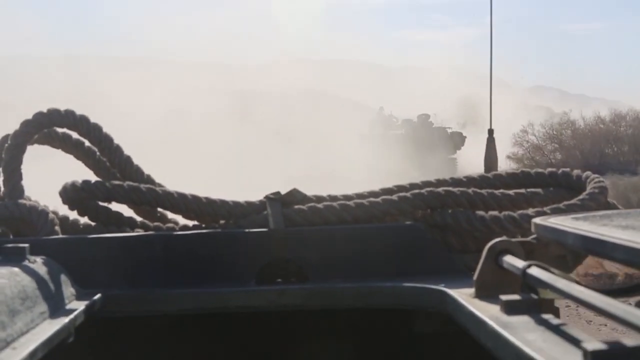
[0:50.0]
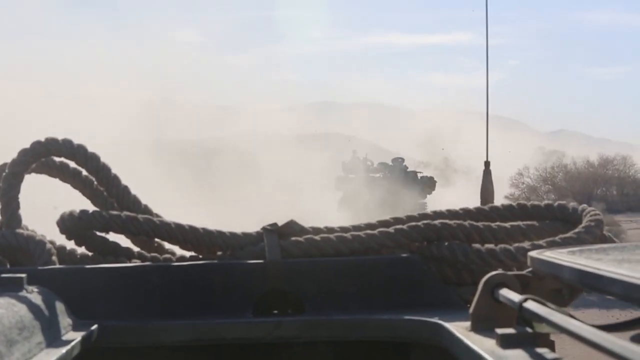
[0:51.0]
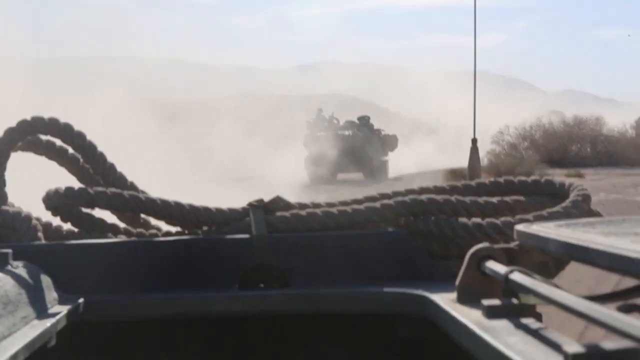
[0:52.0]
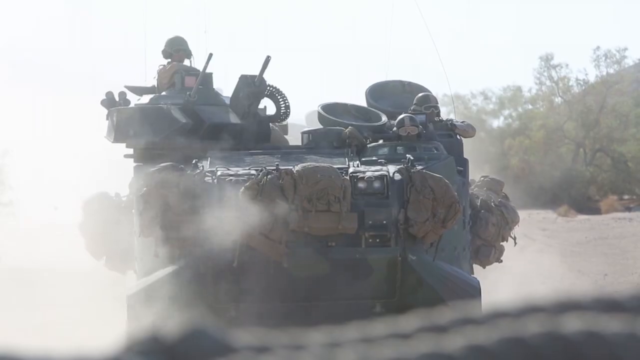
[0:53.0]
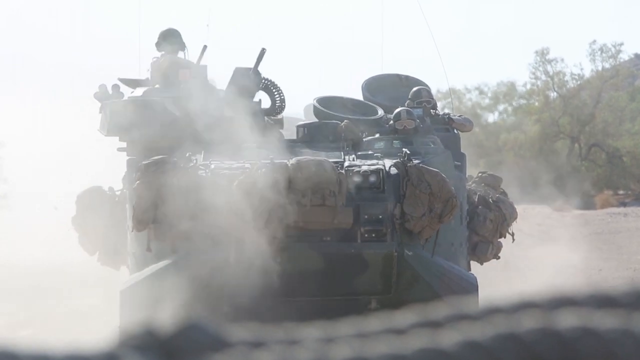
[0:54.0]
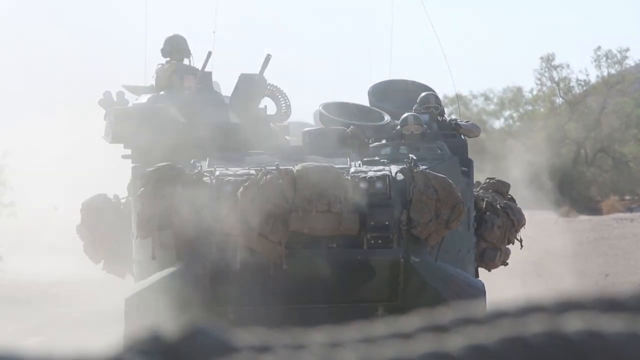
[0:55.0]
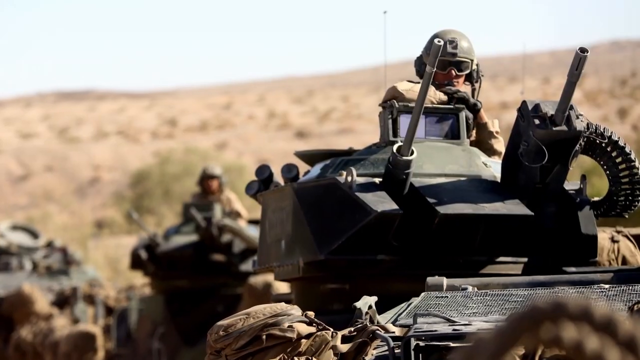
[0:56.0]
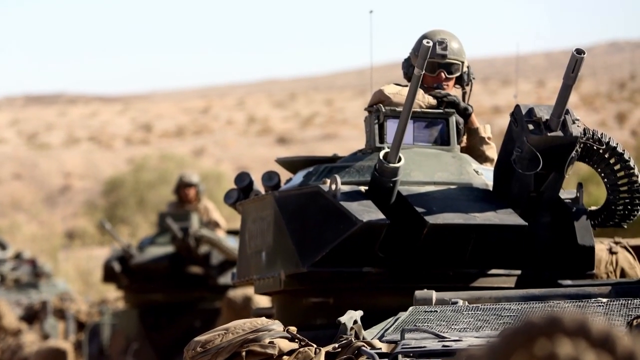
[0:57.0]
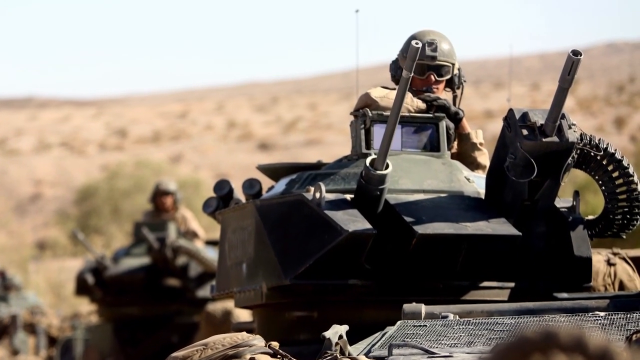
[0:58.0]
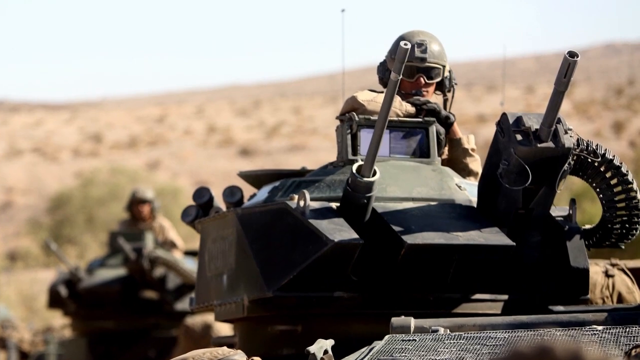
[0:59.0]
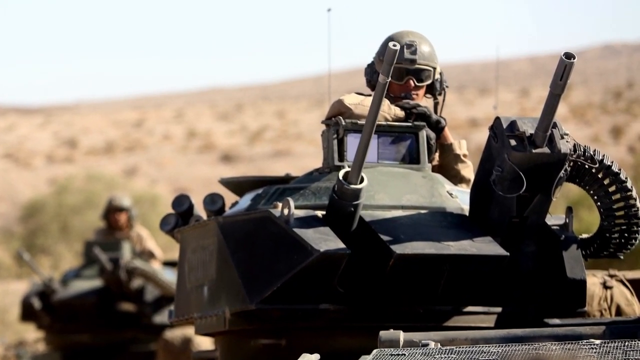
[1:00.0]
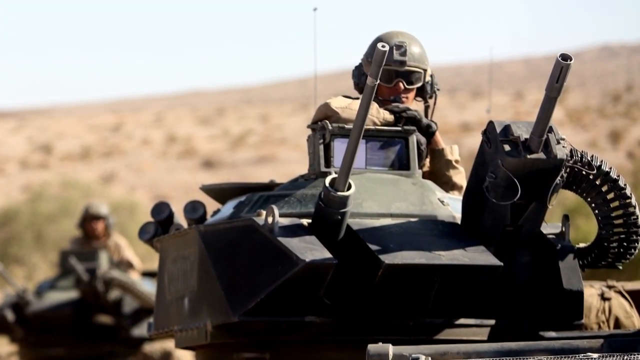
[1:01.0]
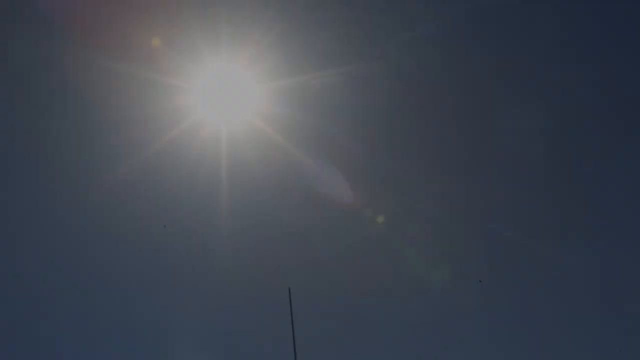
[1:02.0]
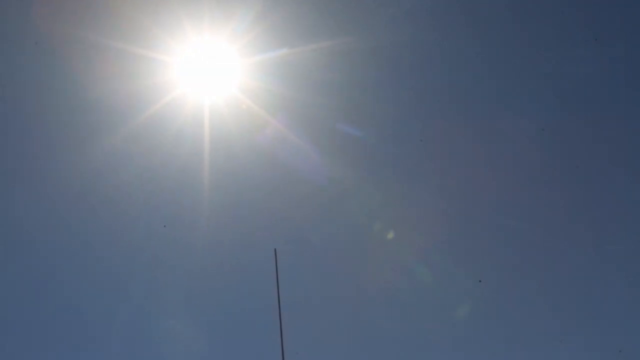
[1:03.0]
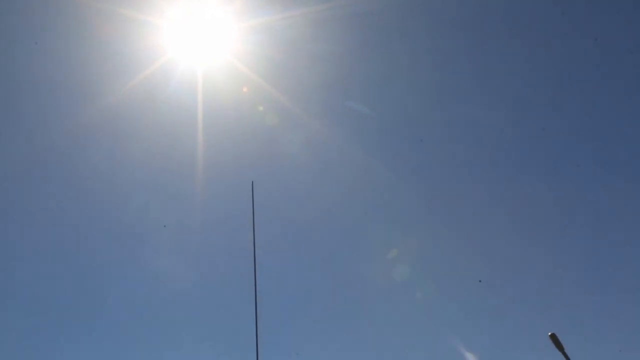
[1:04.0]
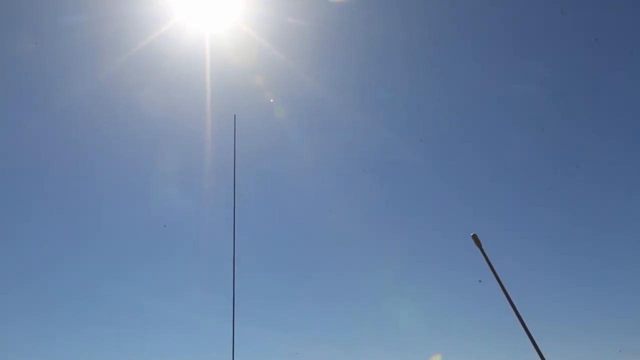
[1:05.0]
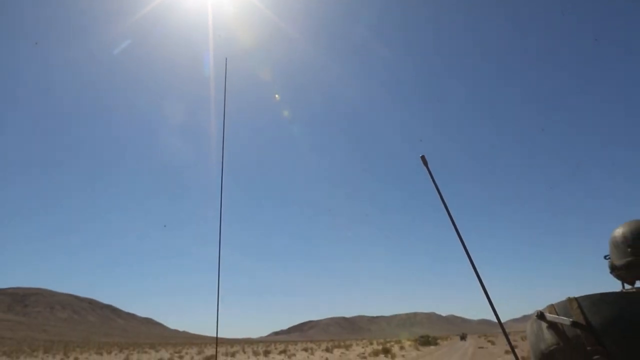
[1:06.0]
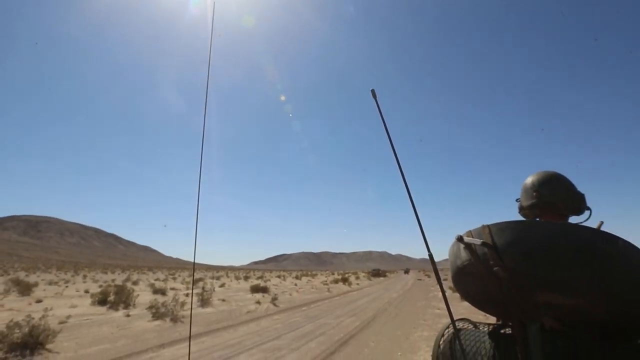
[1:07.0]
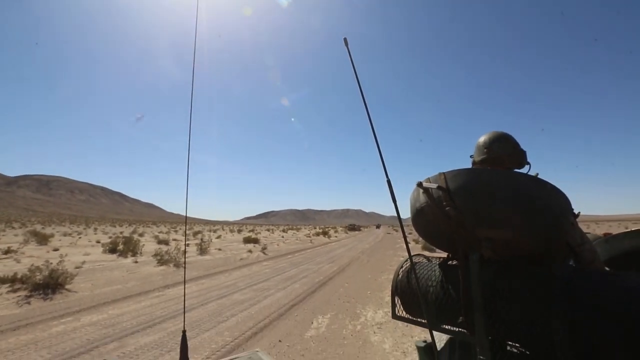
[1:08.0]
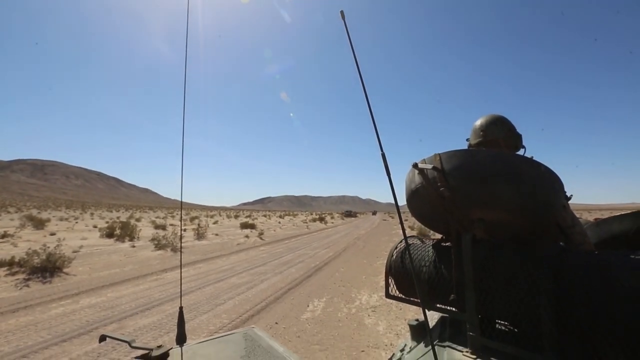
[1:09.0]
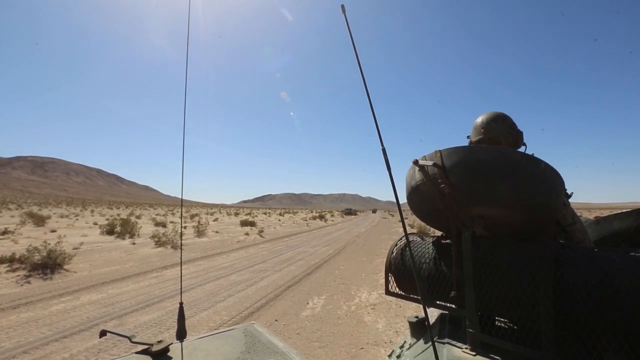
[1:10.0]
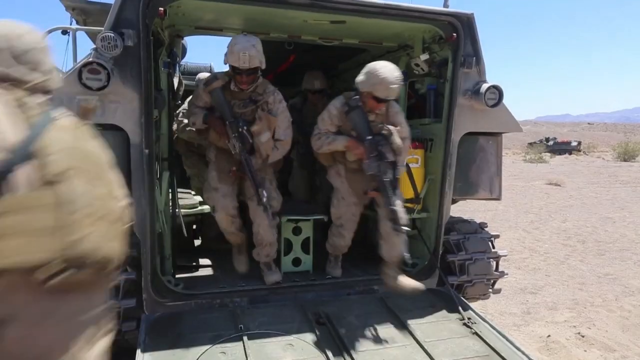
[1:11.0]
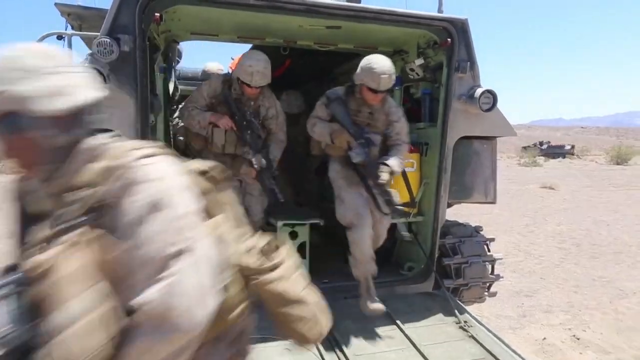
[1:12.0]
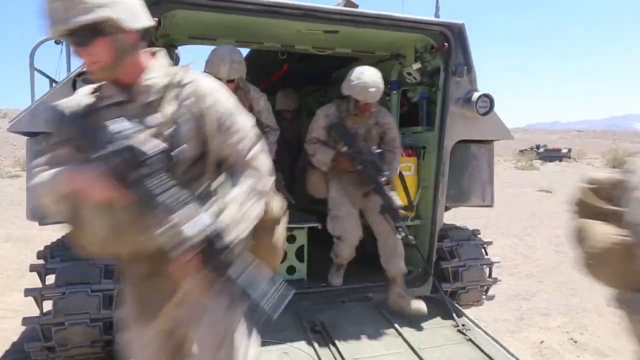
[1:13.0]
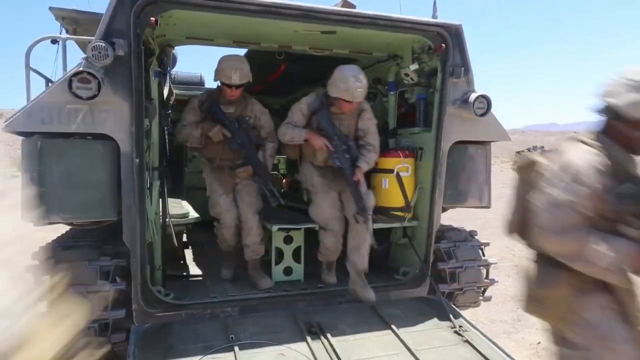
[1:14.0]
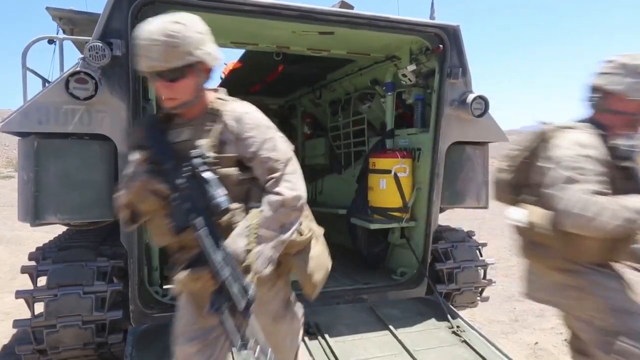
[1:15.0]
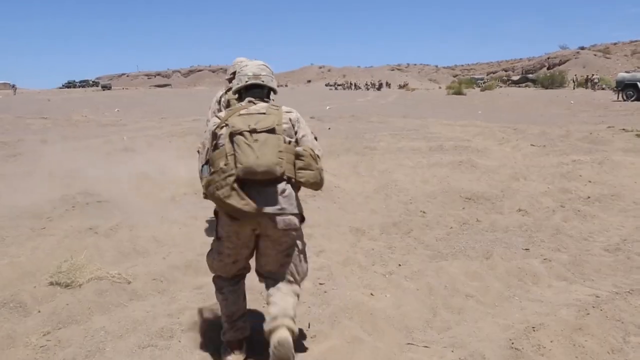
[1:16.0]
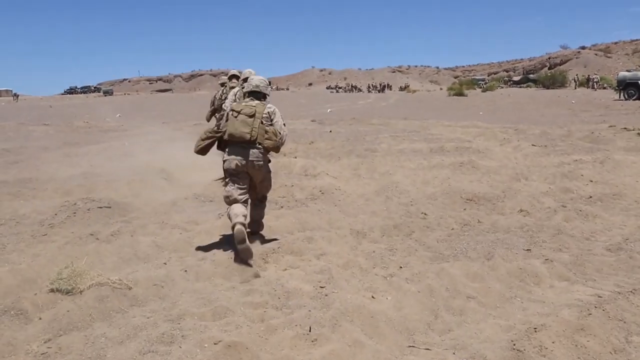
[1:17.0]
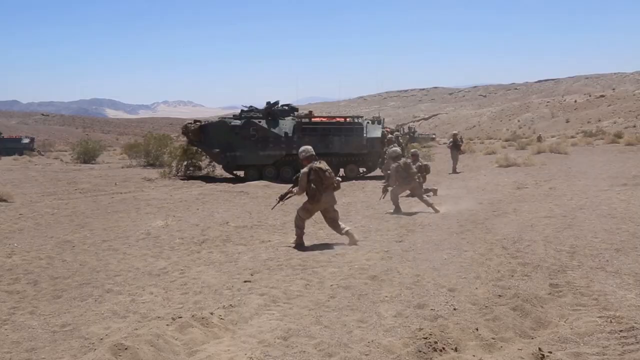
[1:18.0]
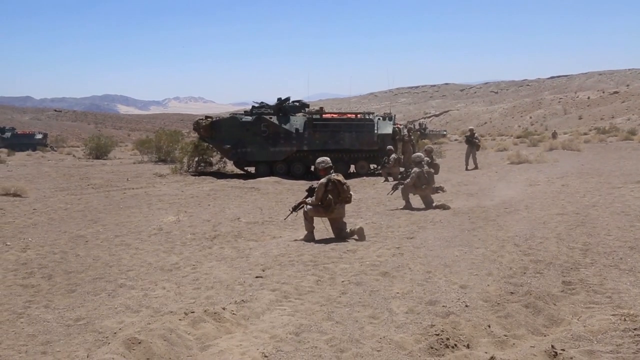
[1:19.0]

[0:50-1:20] A shot from a tank seems to look behind the tank. Some rope is folded on top of the back of the tank, and behind it, off in the distance, is another tank with a soldier at the very top on its left side. Another shot shows what looks like a soldier peeking out from the left side of a tank, which appears to be stationary. Then a still image shows a tank in the foreground with a soldier facing the camera, wearing dark glasses and a helmet. In front of him, what look like two rifles or barrels stick out from the bottom of the tank. Behind him, another soldier peeks out from another tank, and the background looks like a brown, dirt desert area. The camera zooms in on the two barrels sticking out of the tank. The next footage shows the sun peeking out, and the camera pans down from the sun to reveal a soldier standing at the top of a tank, sort of peeking out of the exit area on top.